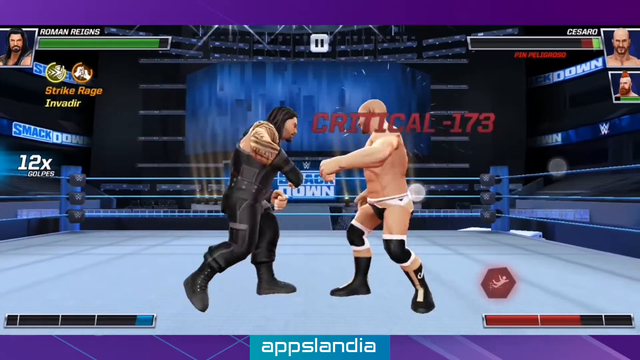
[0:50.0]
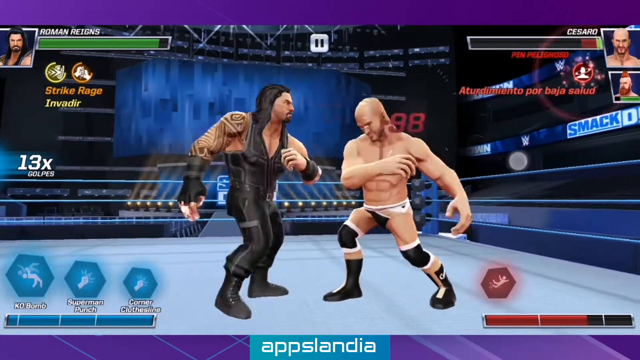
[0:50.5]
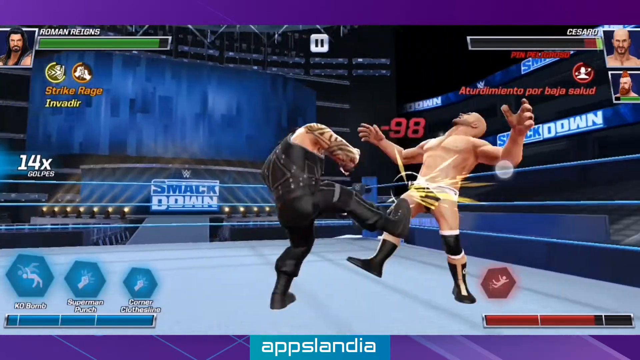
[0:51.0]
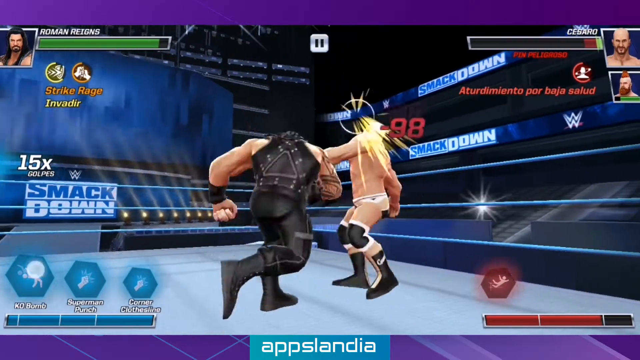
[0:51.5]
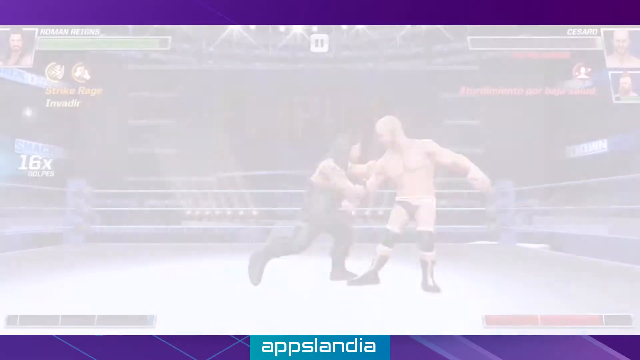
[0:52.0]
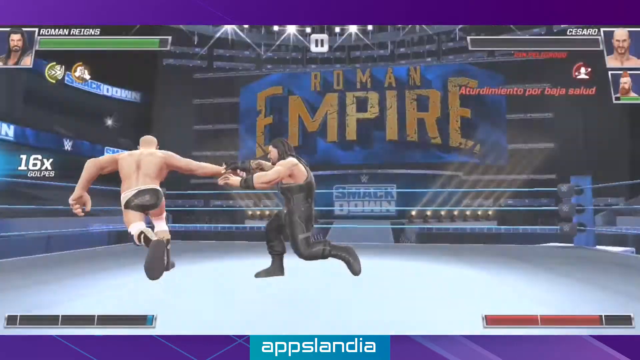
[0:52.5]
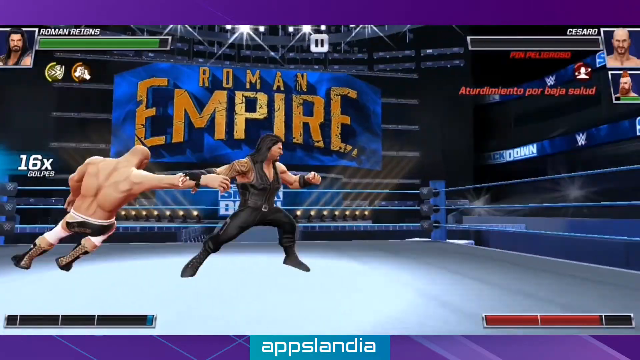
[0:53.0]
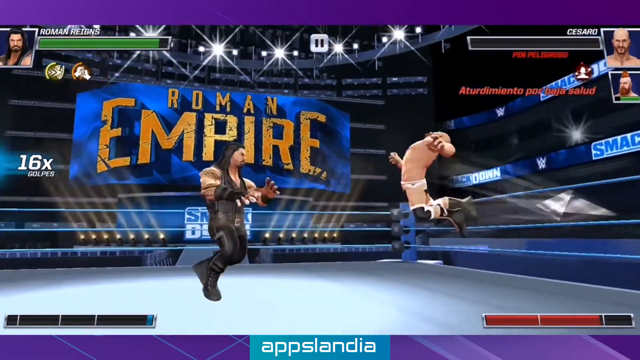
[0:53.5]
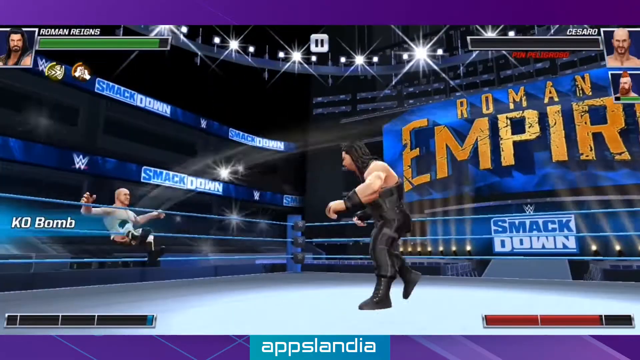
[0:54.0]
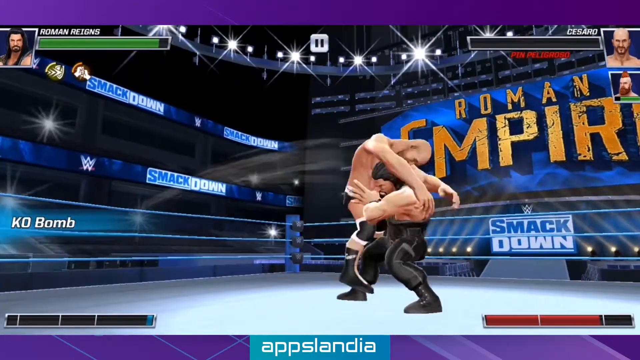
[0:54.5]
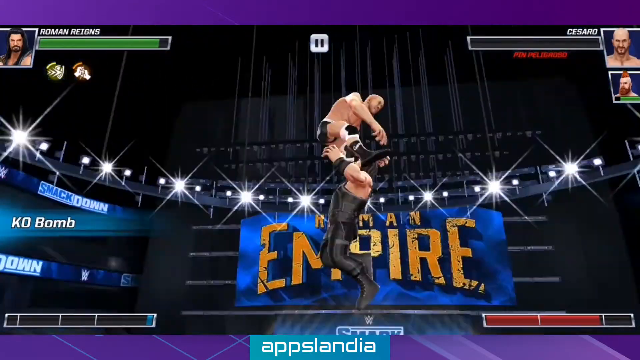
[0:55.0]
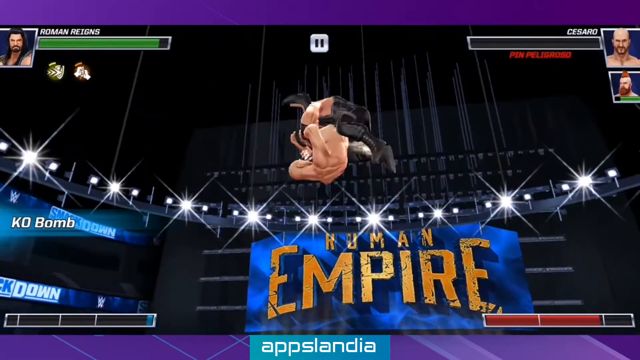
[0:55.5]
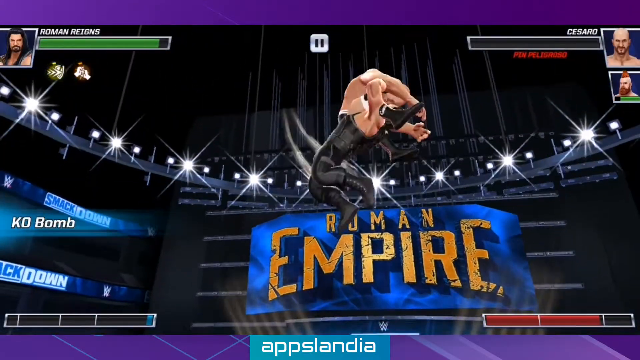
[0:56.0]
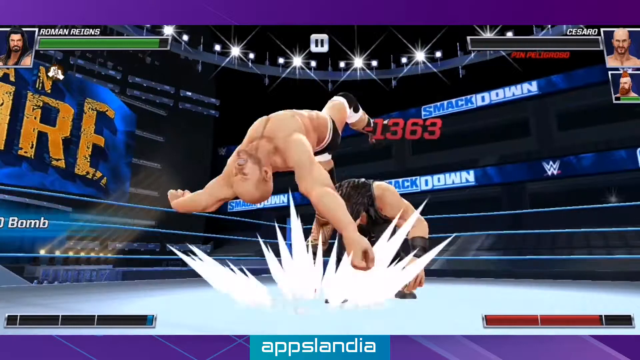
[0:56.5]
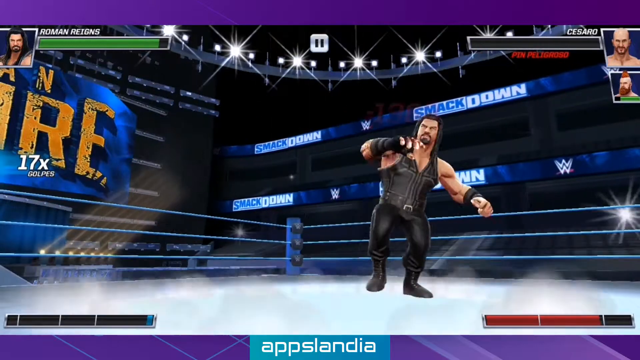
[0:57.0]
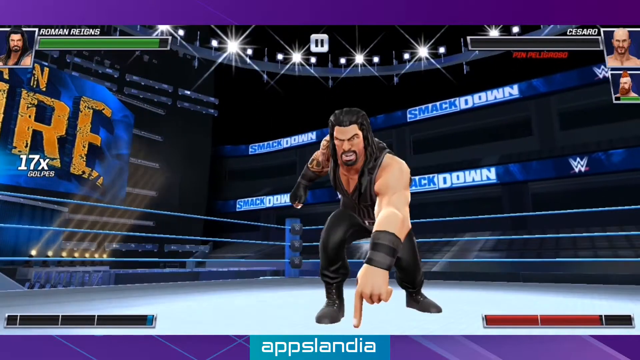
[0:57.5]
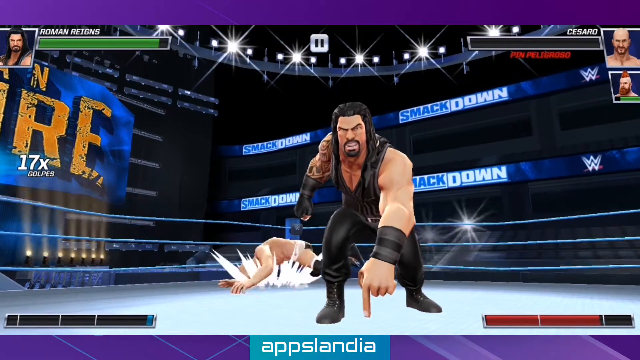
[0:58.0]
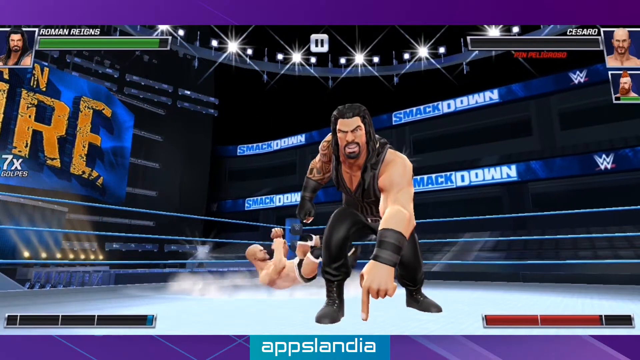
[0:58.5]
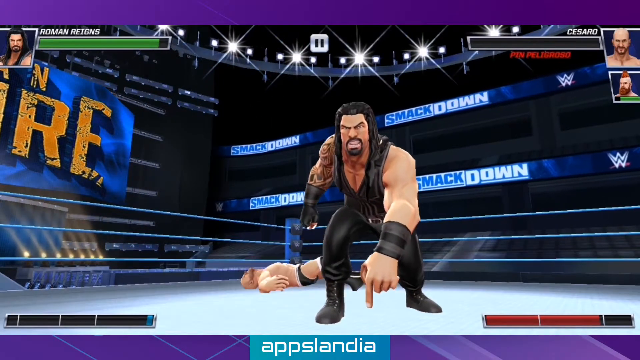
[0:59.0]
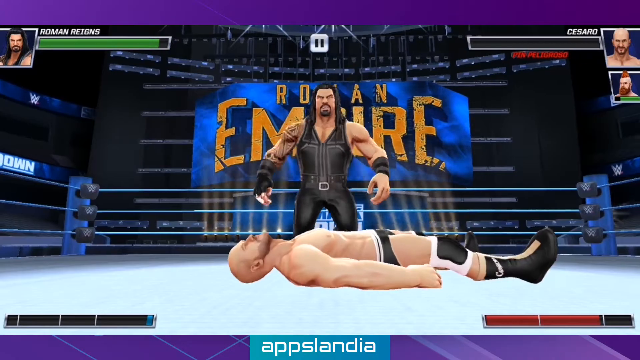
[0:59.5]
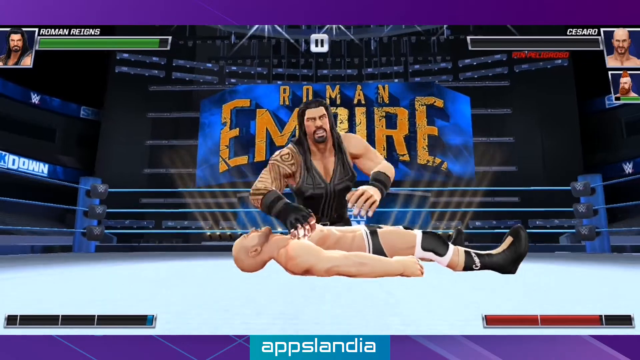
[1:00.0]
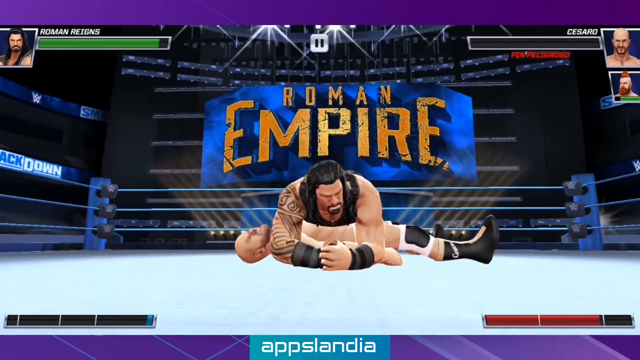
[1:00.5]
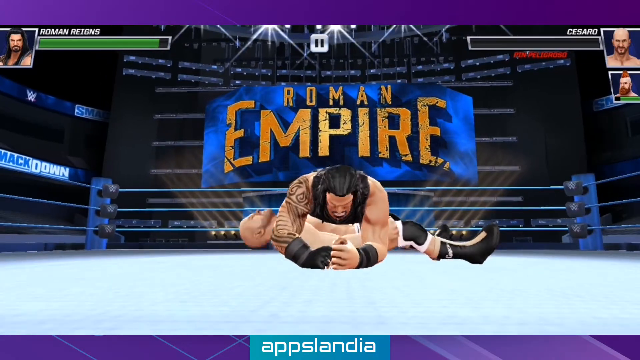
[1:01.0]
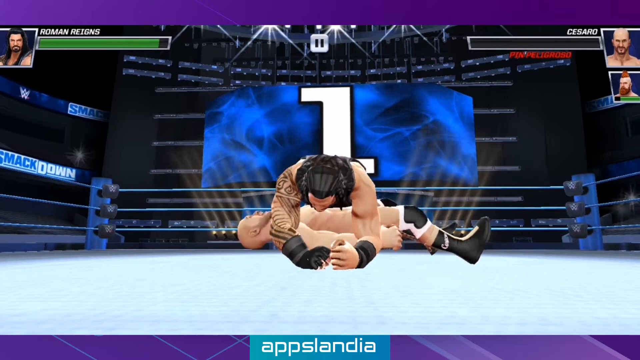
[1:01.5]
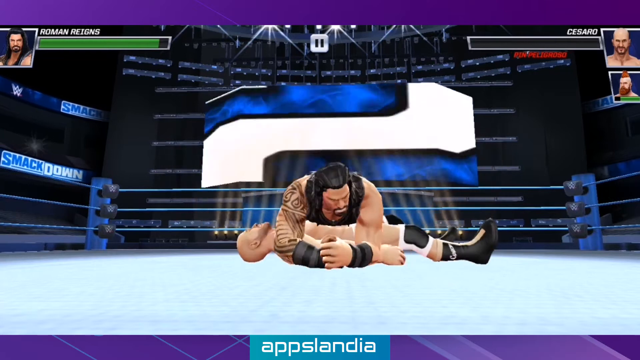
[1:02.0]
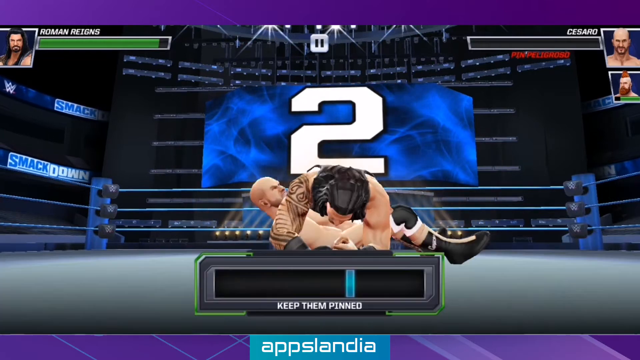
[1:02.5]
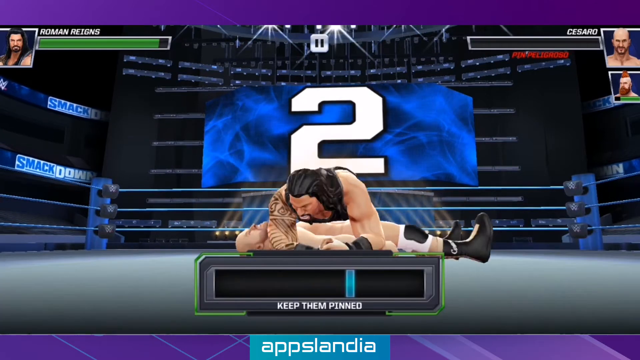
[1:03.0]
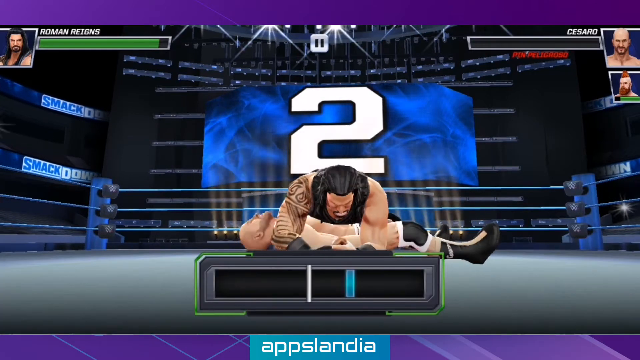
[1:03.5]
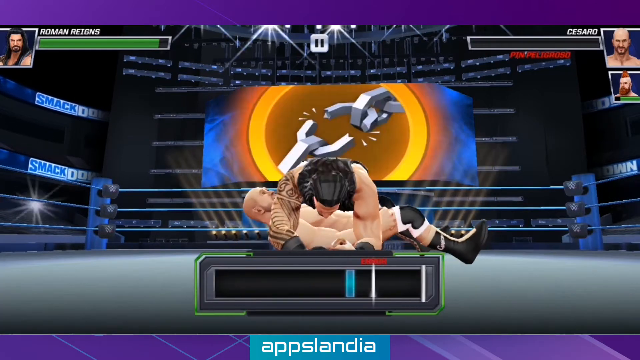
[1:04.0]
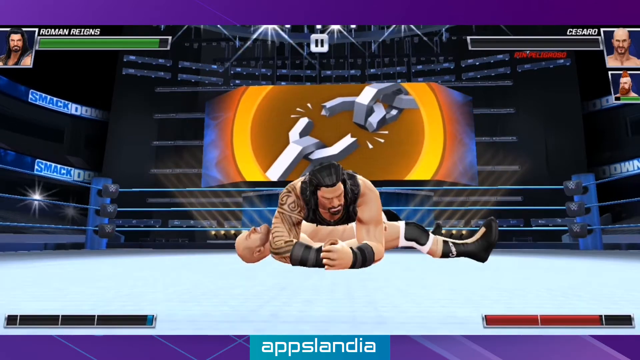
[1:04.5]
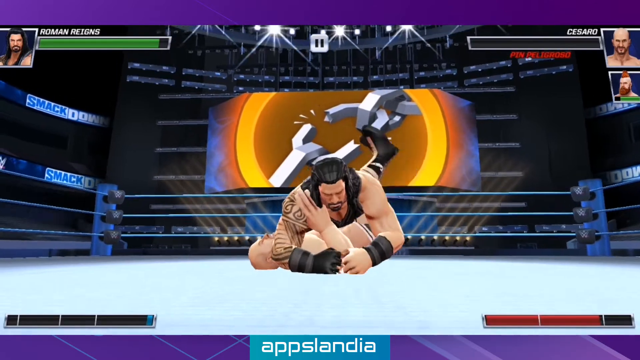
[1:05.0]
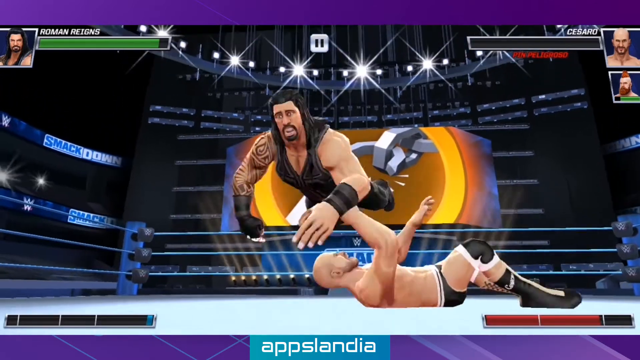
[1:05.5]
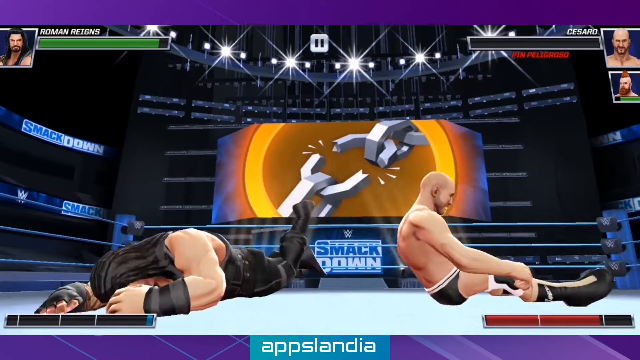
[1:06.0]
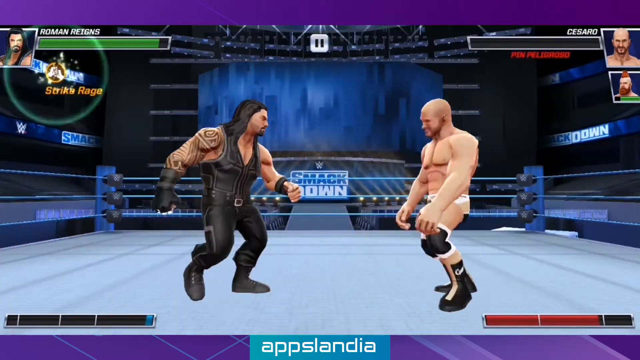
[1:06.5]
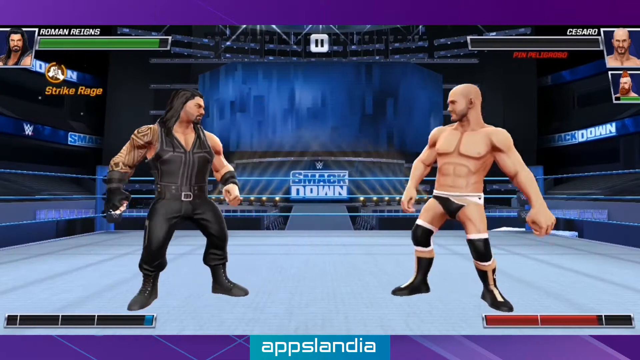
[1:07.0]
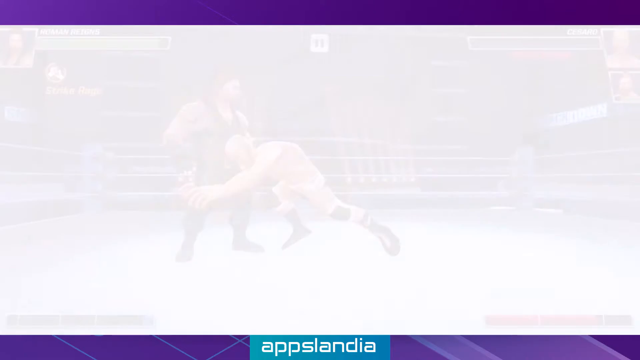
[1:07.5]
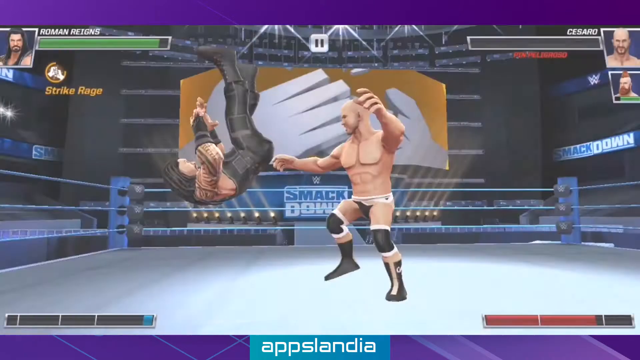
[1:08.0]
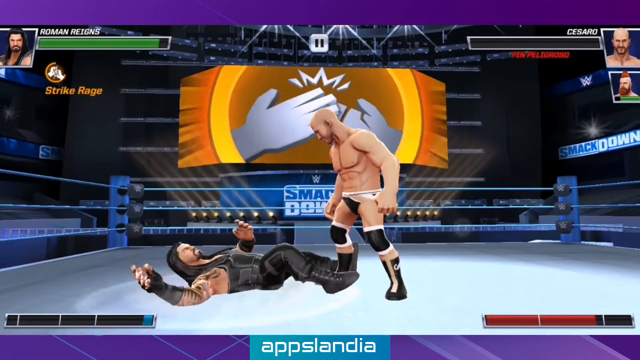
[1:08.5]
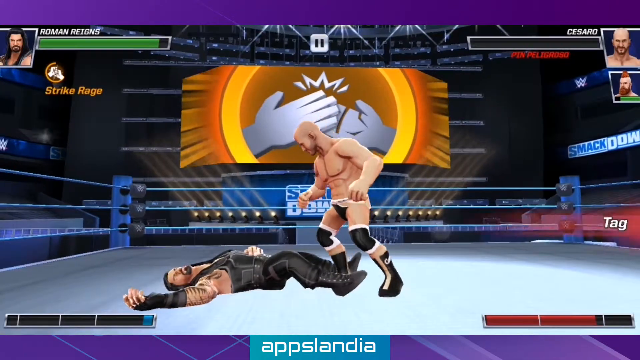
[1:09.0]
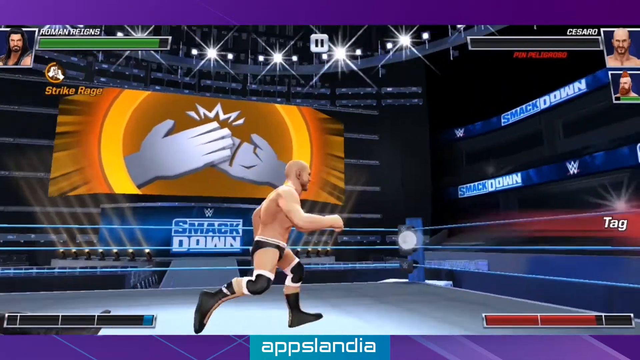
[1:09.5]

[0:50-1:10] Player two's first wrestler gets slammed down and pinned, but breaks the pin. That wrestler's health bar has gone all the way down, yet they are still fighting. Right before the shot ends, they tag in the second wrestler, switching out their players. The graphics do not look very good, and it looks like an older game.